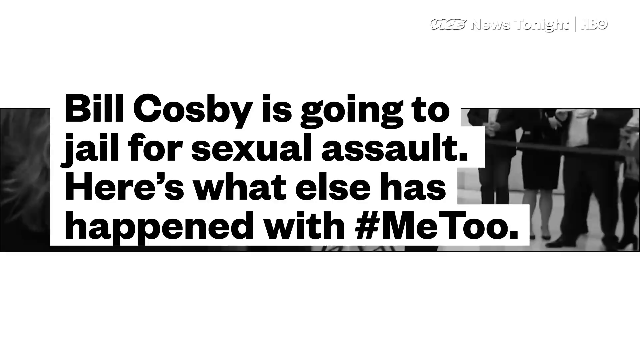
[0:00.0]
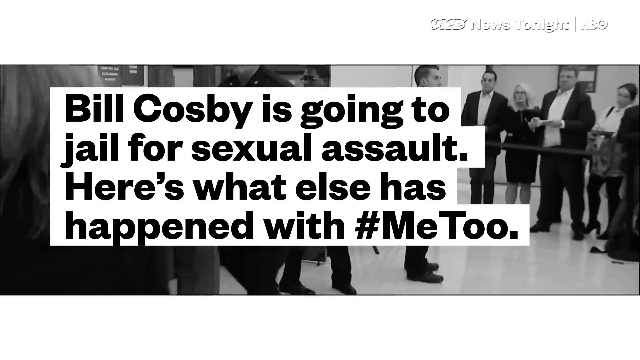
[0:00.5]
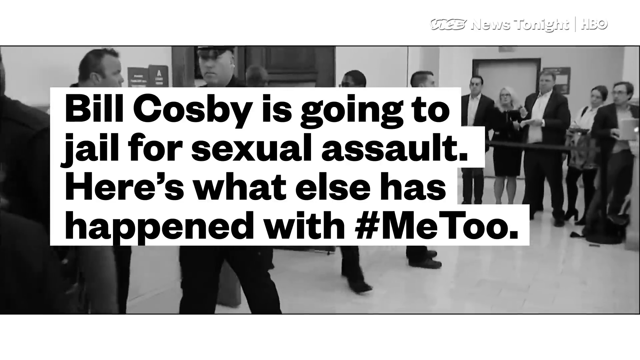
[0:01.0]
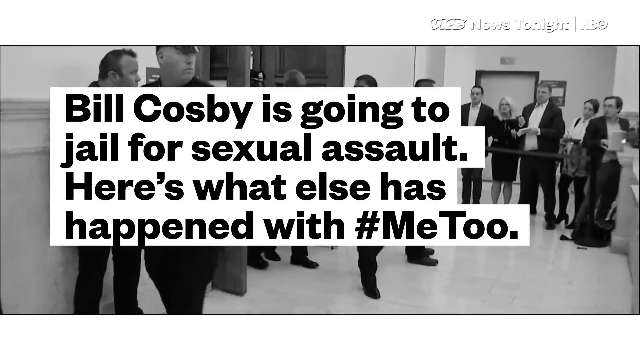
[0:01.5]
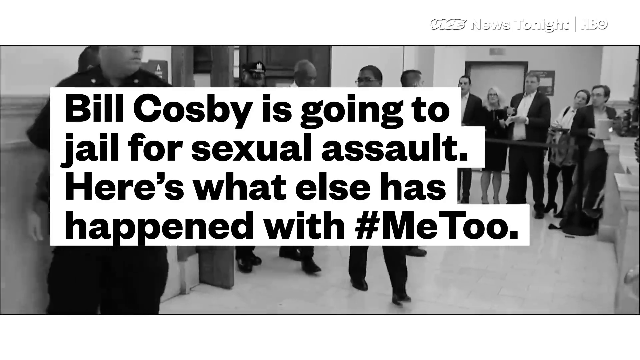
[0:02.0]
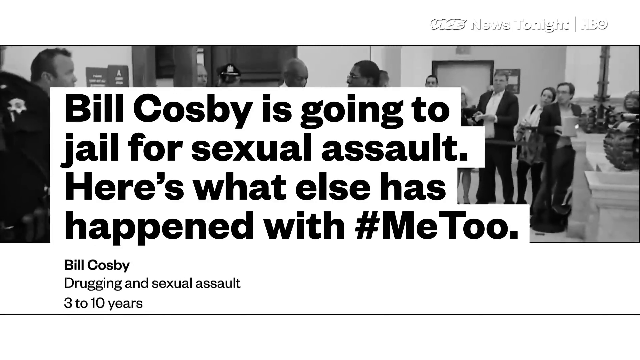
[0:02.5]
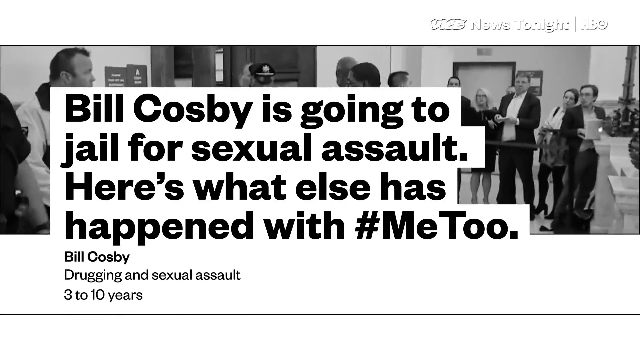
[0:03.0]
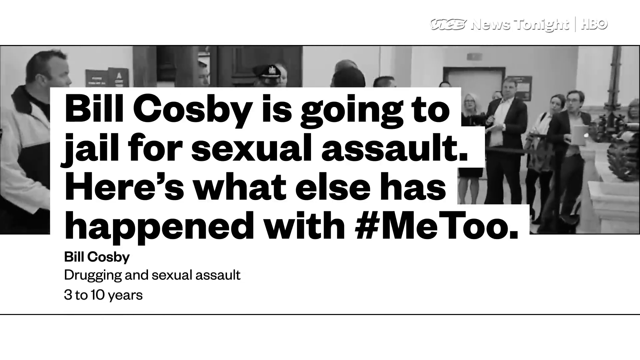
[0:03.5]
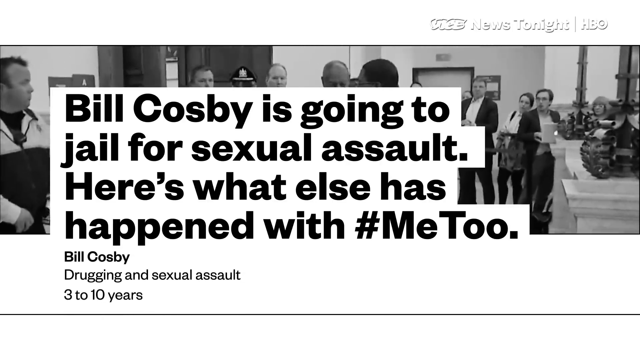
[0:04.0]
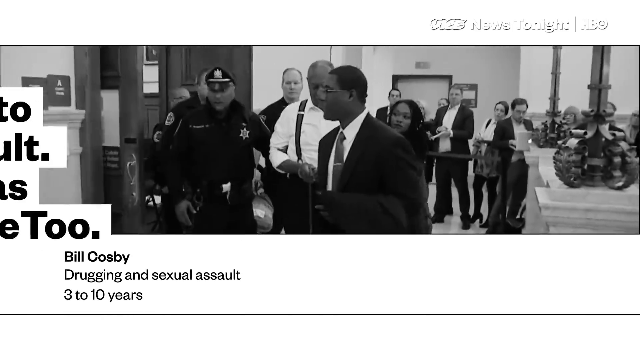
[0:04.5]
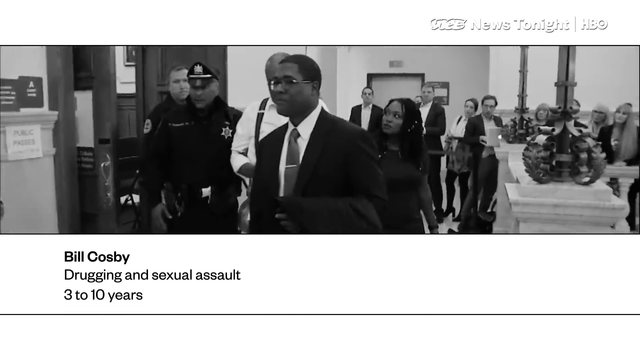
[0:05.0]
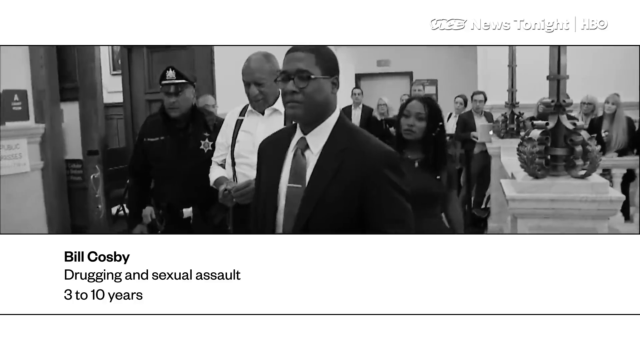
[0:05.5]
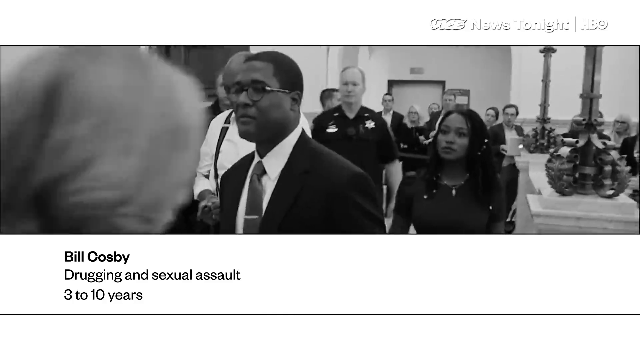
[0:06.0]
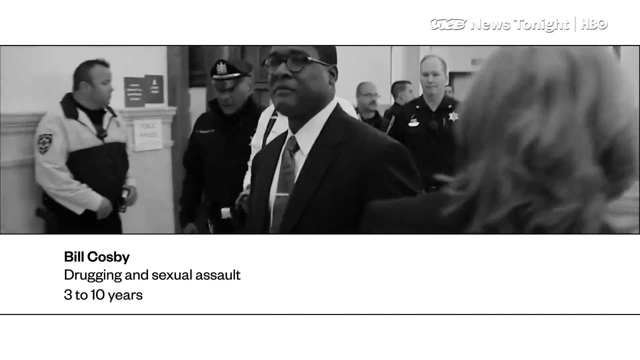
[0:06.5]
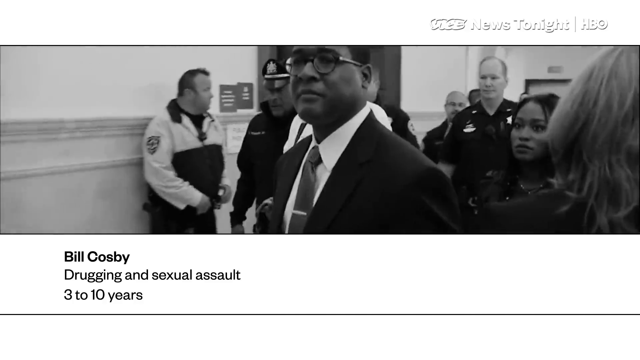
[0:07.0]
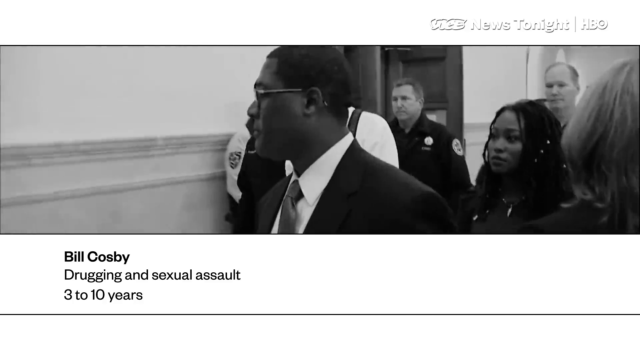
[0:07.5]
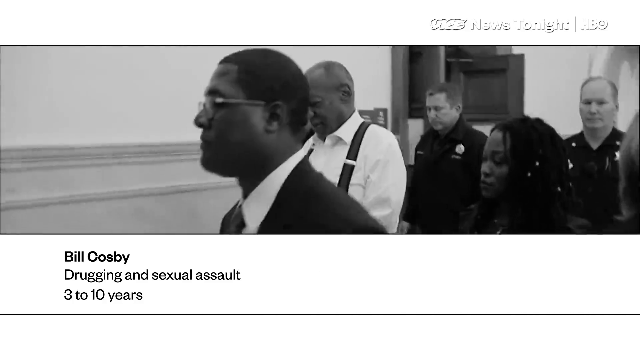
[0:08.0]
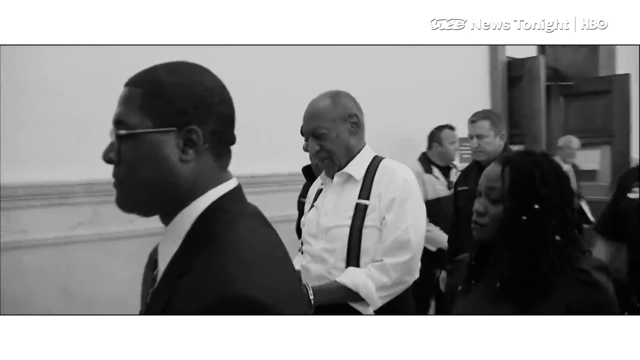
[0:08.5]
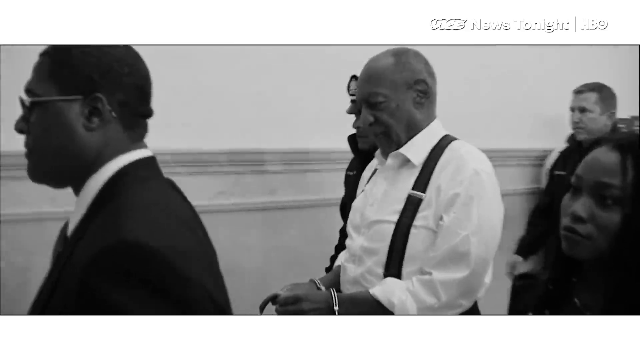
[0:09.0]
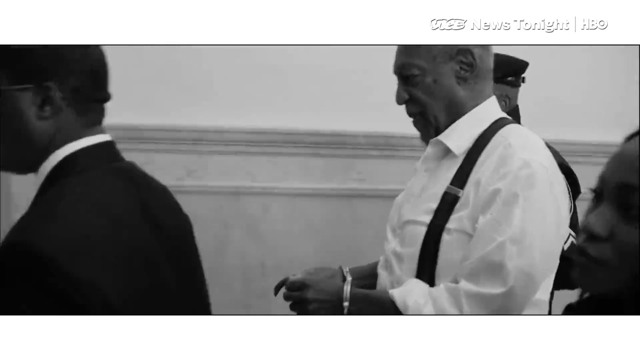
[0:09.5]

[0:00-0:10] A video with a caption shows a news piece about Bill Cosby going to jail. A large number of people walk from the rear of the screen toward the front, moving roughly from right to left. A man in front wears a tie with a tie clip, a dark-coloured suit and glasses. Behind him is a man in braces and a white shirt whose hands are handcuffed and held in front of him; he is flanked by two other people. To the right of the handcuffed man is a police officer or security guard wearing a flat peaked cap, and to his left is a lady. Everyone in the group has a very serious expression as they walk from right to left.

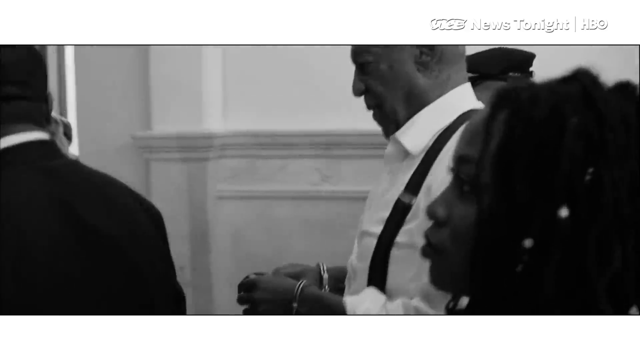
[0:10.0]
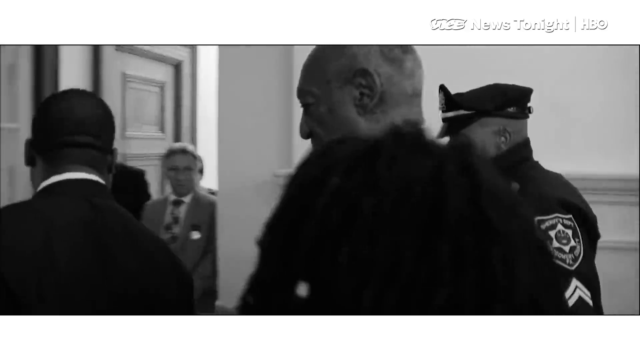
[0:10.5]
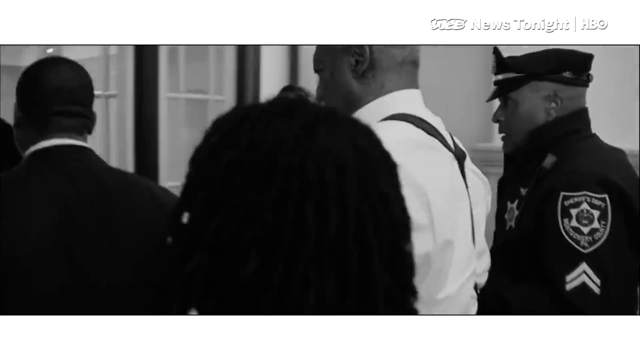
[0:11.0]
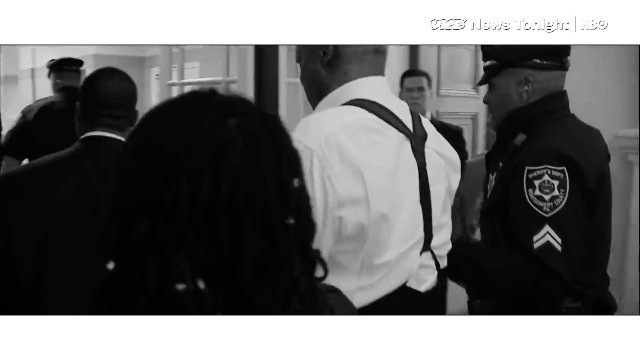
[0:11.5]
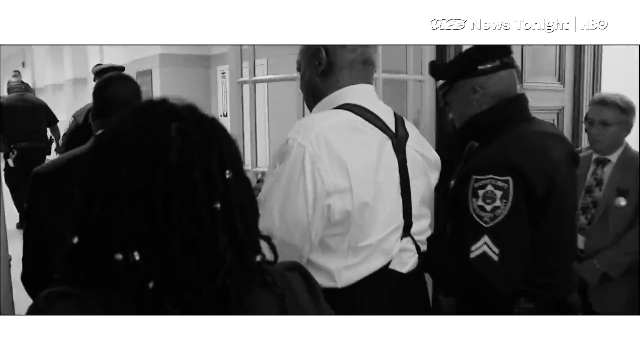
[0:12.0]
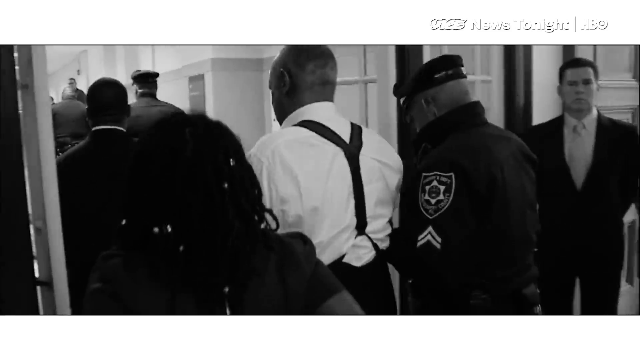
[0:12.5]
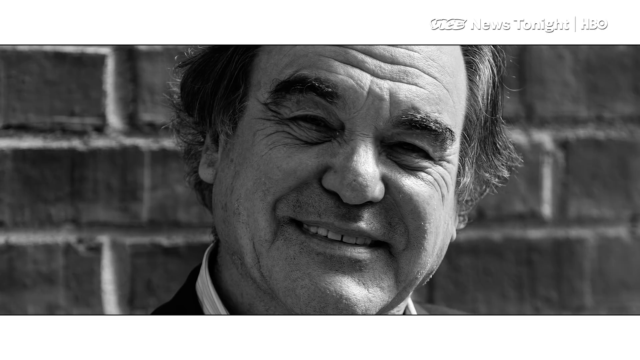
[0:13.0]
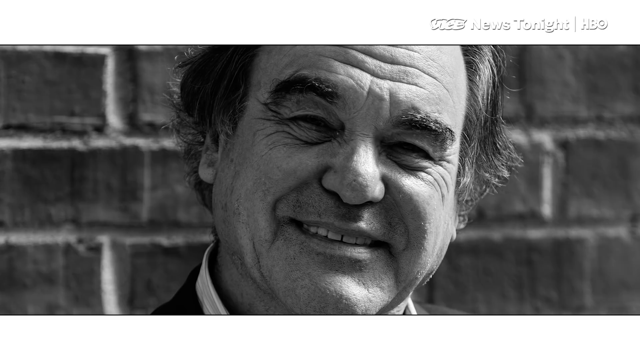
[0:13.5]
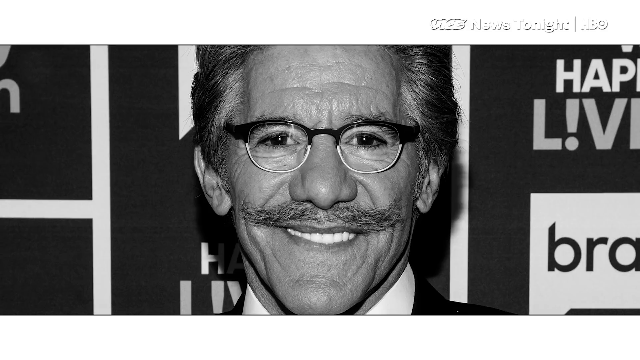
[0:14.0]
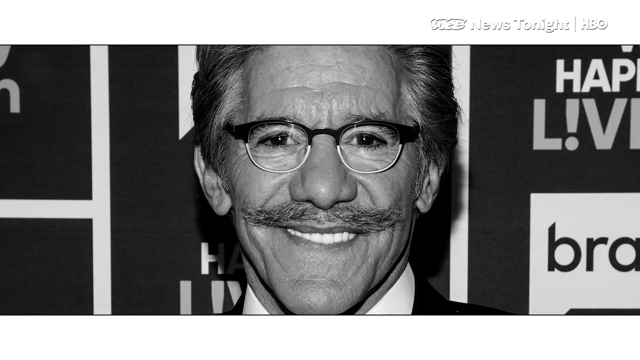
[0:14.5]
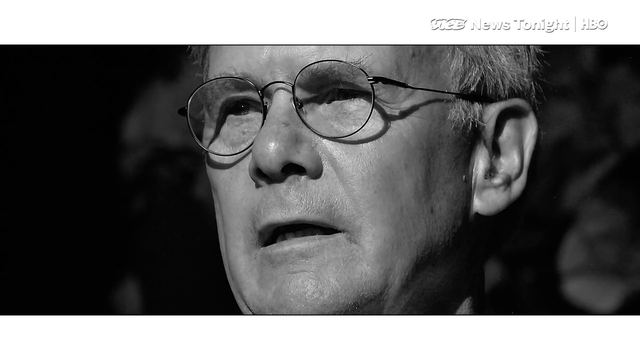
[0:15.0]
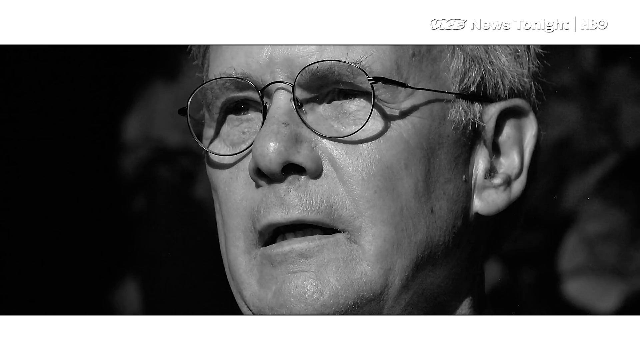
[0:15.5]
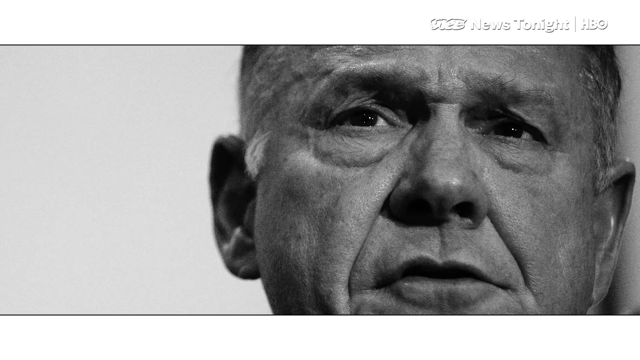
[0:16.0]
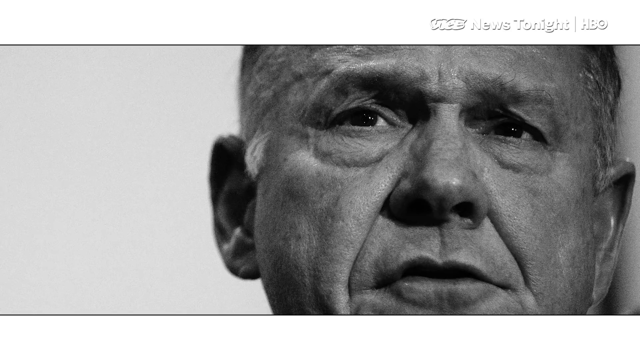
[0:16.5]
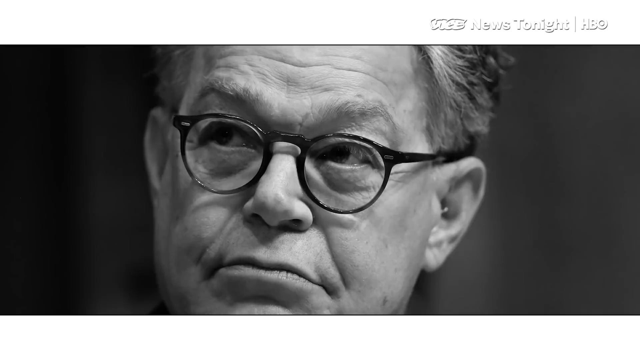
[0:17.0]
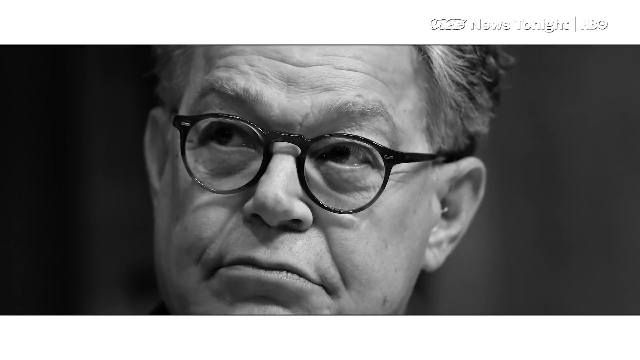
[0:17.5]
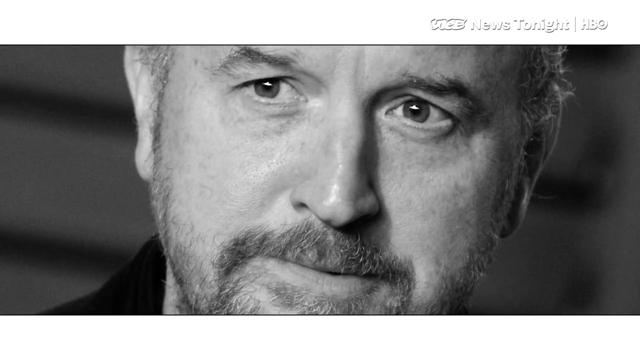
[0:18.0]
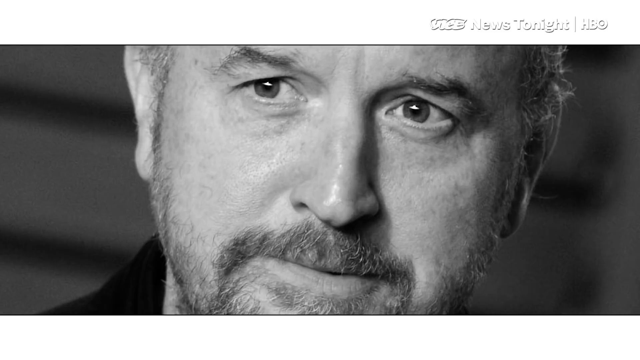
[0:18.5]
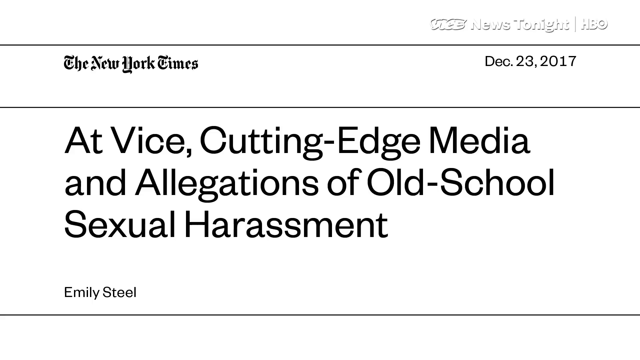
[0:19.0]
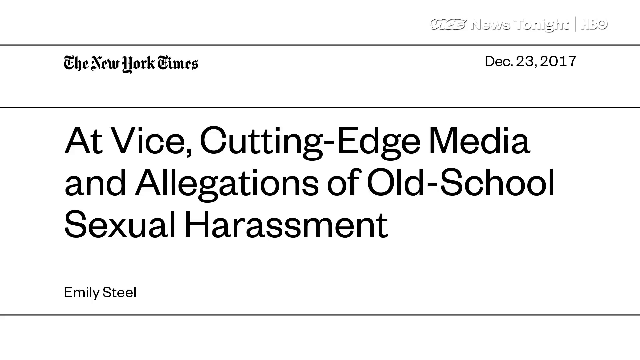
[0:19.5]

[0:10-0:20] The group walks away up the corridor, and the man in uniform is holding the right arm of the handcuffed man. As they walk away, a series of faces of middle-aged men is shown, followed by a New York Times headline dated the 23rd of December 2017 that mentions "cutting-edge media and allegations of old-school sexual harassment".